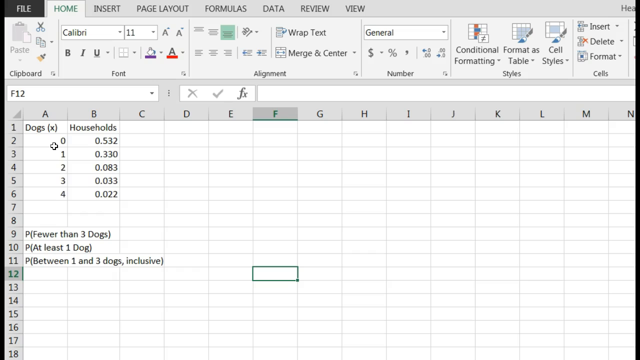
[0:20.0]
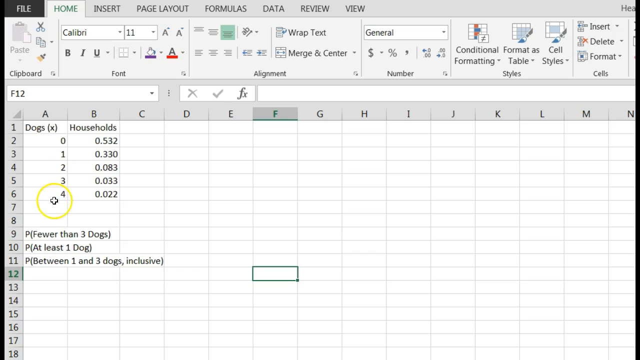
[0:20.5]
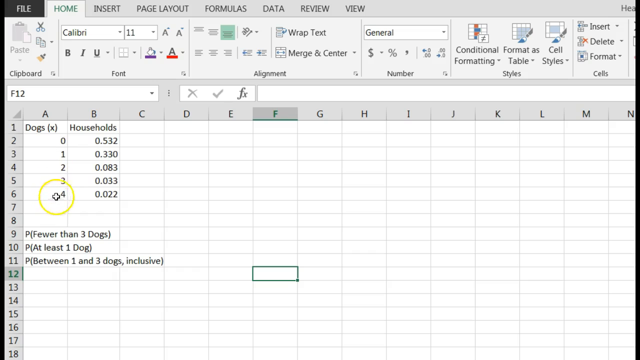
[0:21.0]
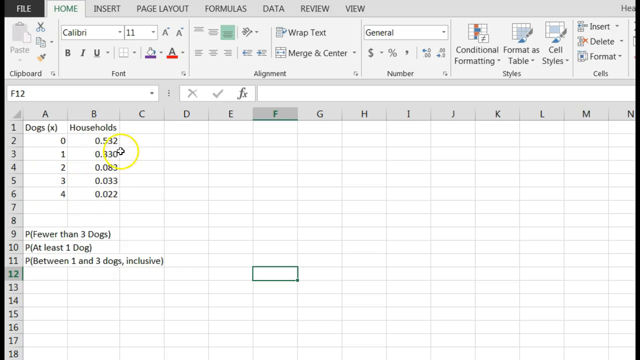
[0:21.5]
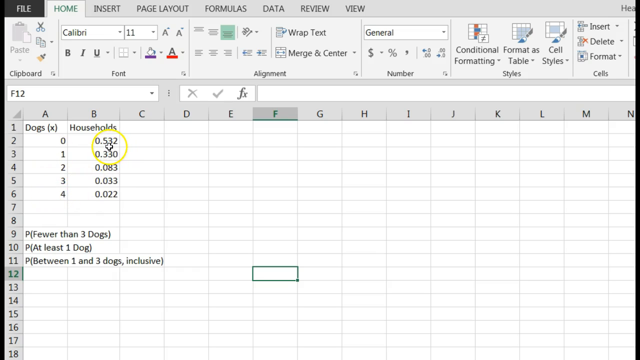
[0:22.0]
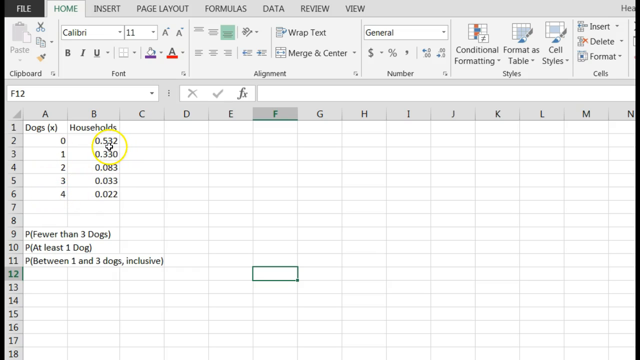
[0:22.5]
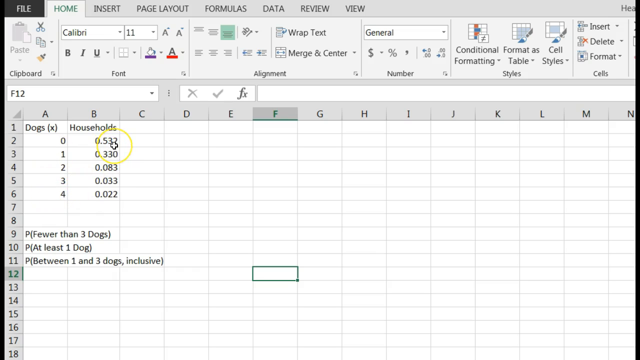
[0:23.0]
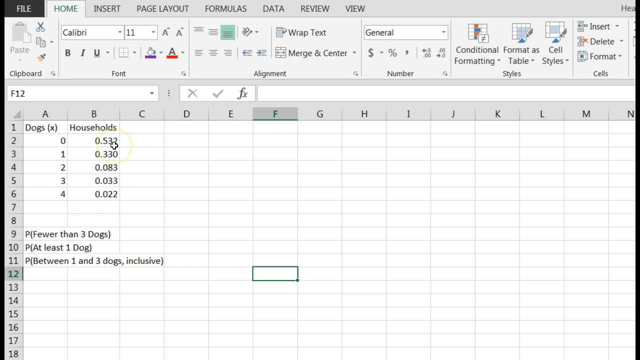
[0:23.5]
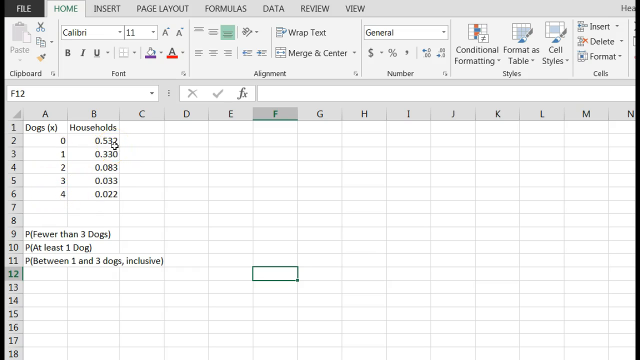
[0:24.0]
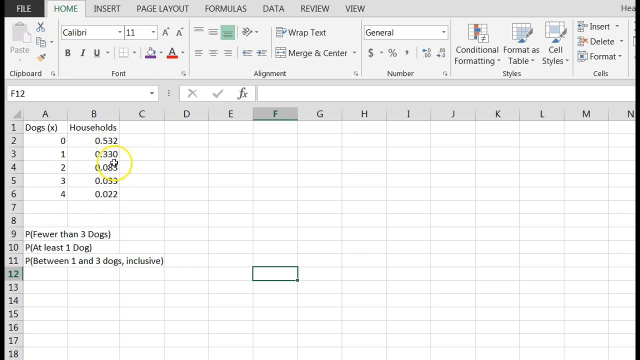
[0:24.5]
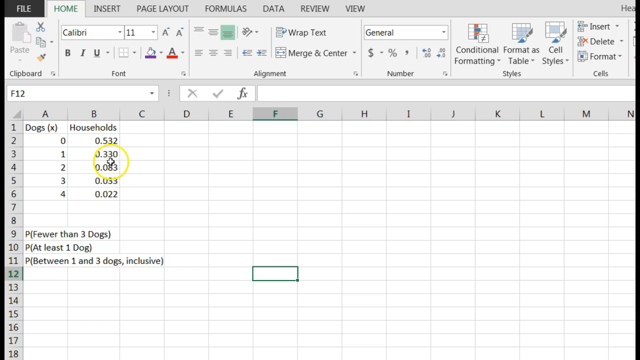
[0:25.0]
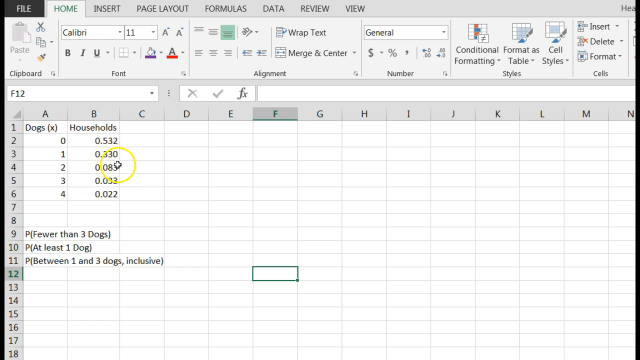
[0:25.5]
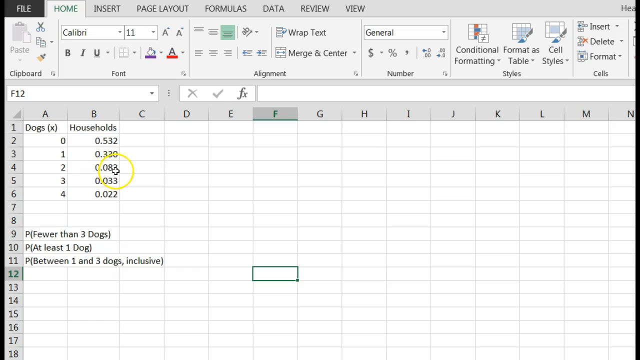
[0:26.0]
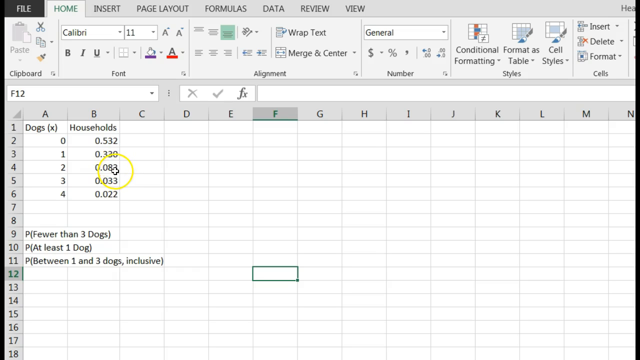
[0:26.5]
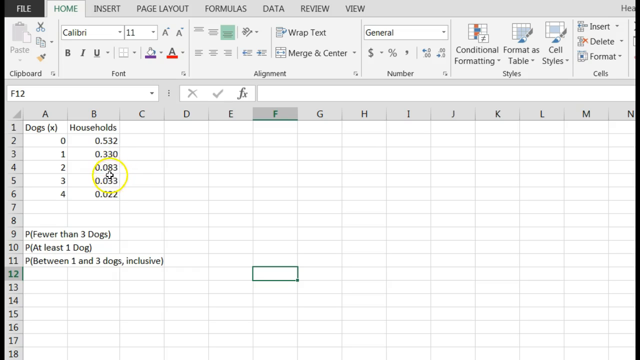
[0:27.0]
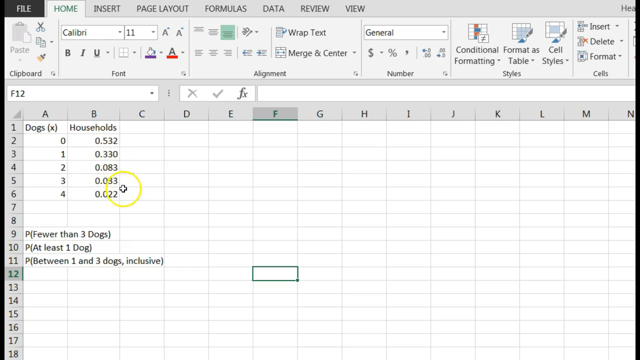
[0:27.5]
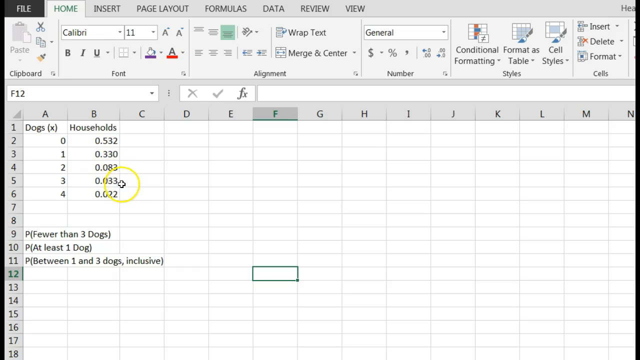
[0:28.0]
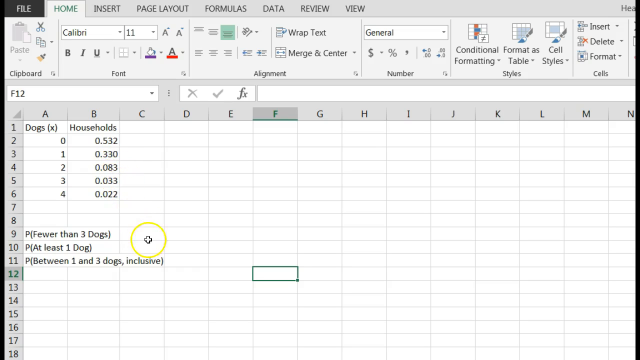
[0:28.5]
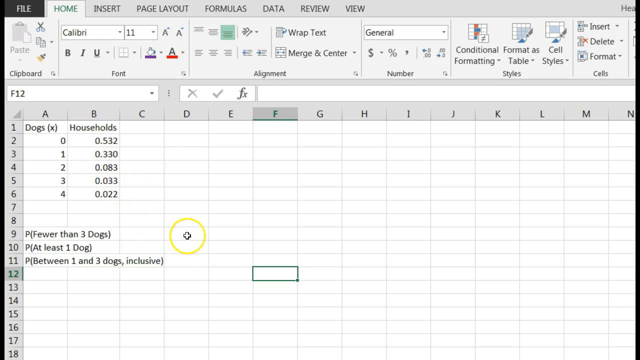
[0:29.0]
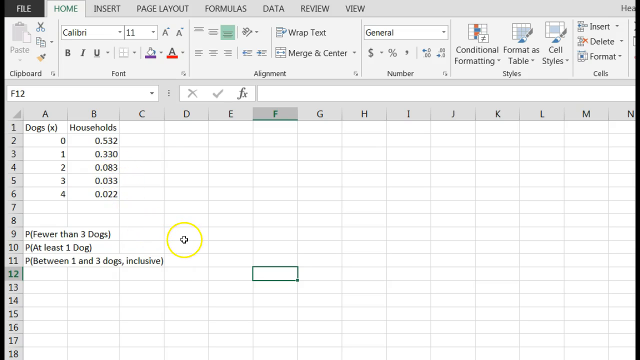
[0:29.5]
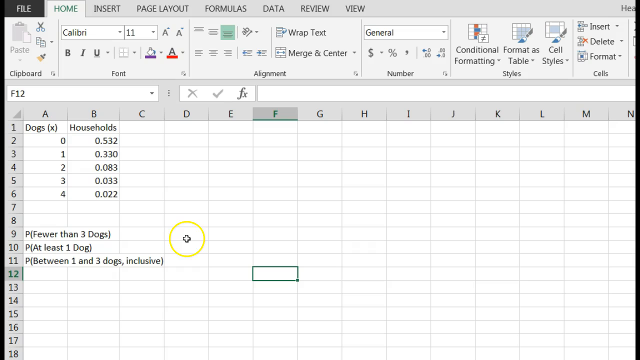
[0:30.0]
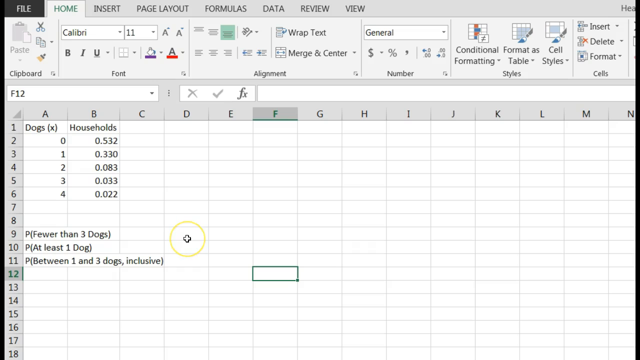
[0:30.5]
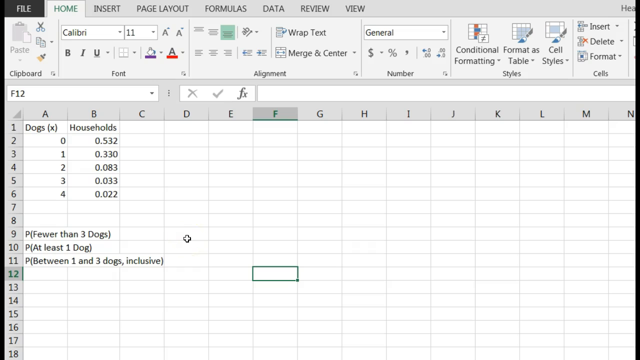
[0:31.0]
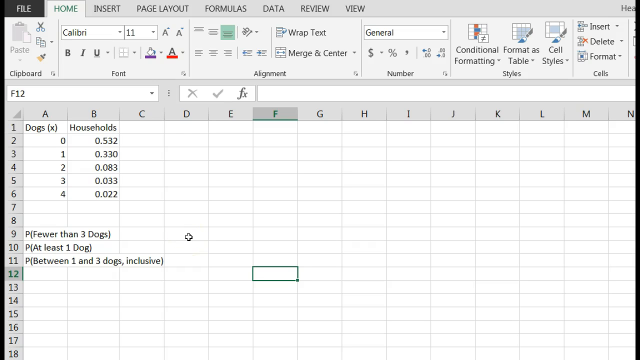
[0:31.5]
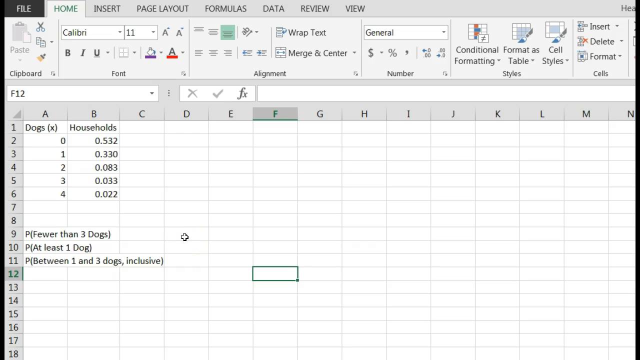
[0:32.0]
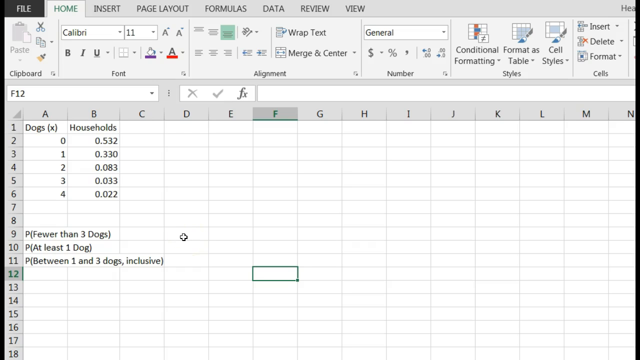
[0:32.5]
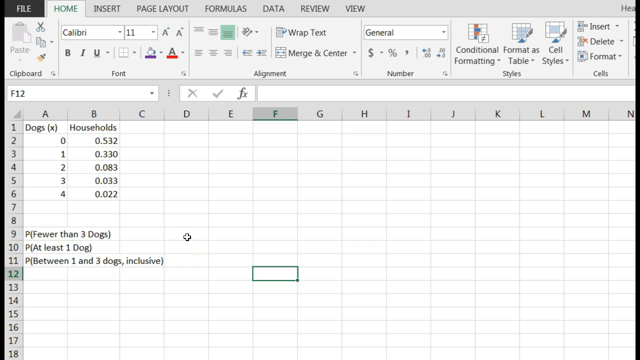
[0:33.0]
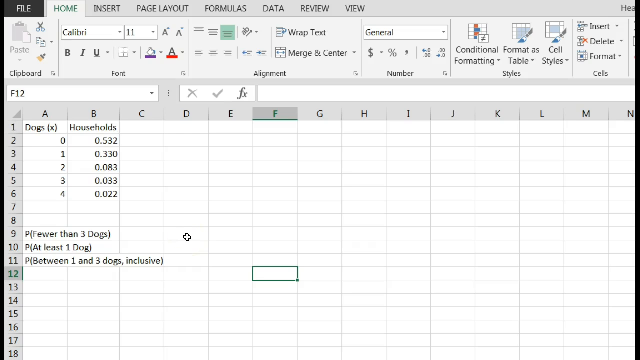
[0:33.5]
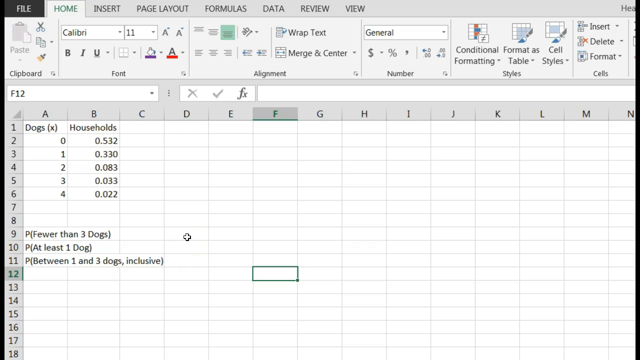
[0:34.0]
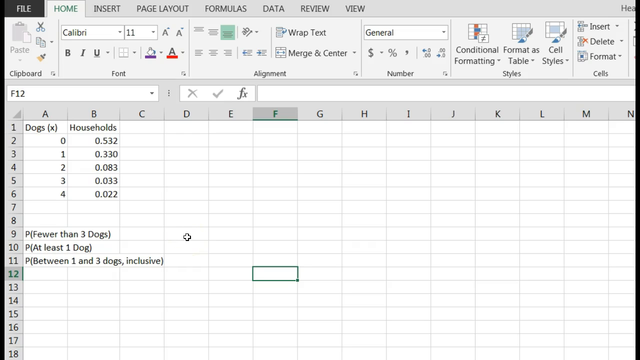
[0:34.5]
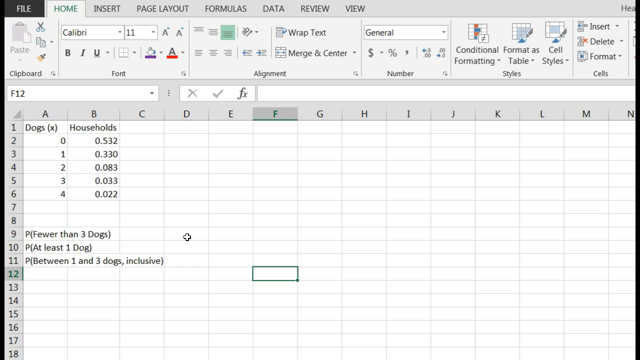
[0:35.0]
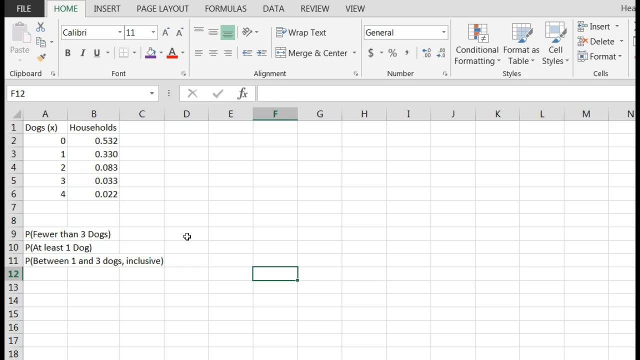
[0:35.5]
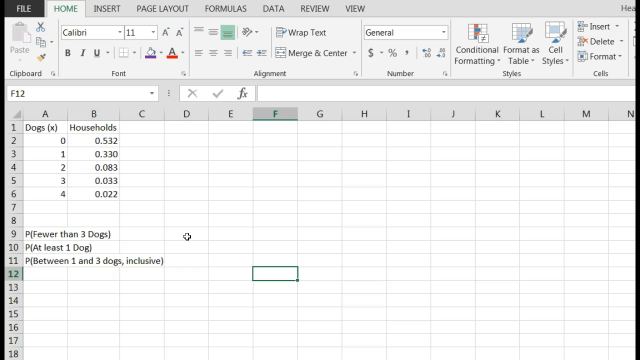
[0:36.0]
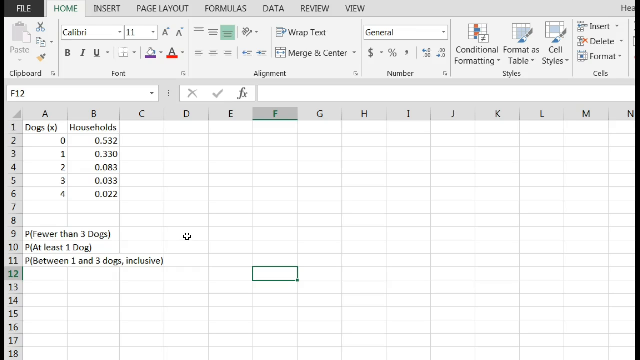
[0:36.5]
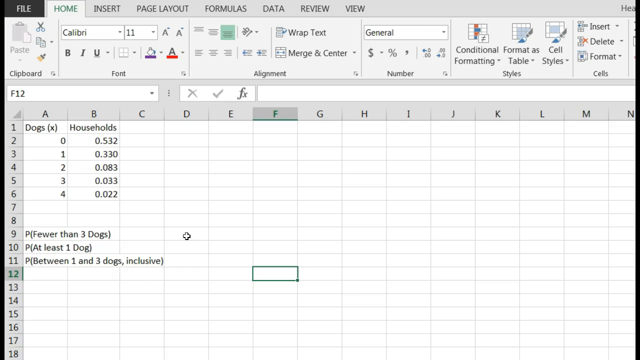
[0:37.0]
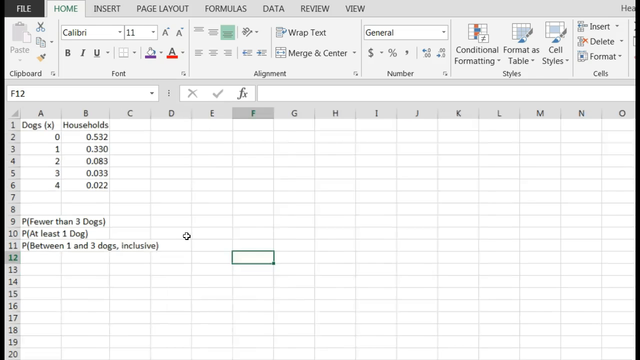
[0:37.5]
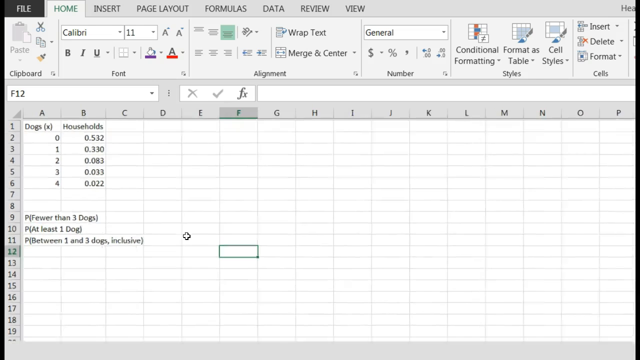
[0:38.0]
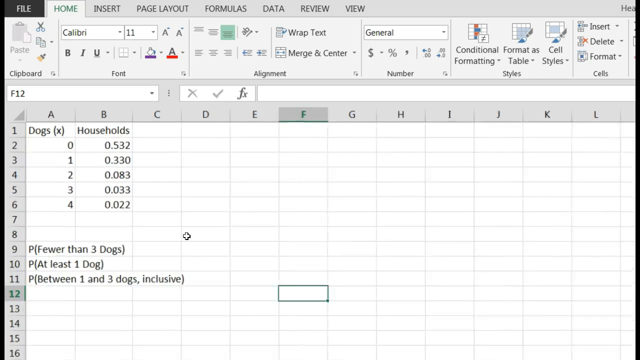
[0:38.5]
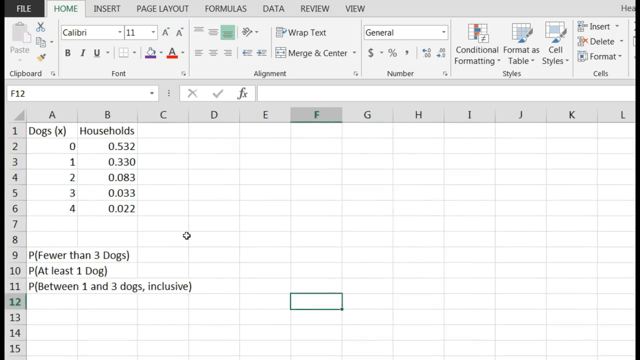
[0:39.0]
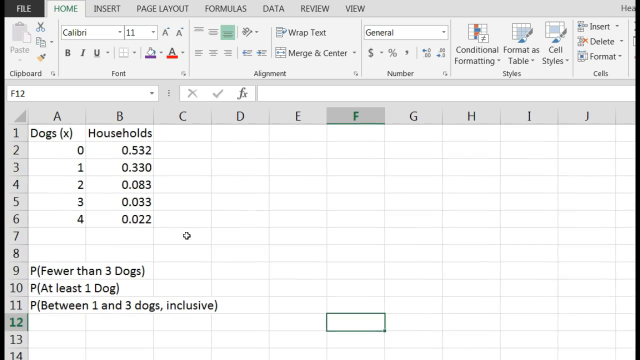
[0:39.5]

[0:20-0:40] The cursor moves all over the sheet, starting at A6, then going over 0.532. The circle around it disappears for a second, and the cursor moves around A3, roughly going from top to bottom through the cells in each column. It moves to D9, which is blank, and the circle disappears briefly again. The view zooms in and out and then in again, hovering around C6, which is to the right of the 0.022 value in B6. The header of the active column is shaded a darker gray at the top, with the letter F in green and a green underline. On the left, the row header 12 is also a darker gray box than the lighter ones around it, with the 12 in green.